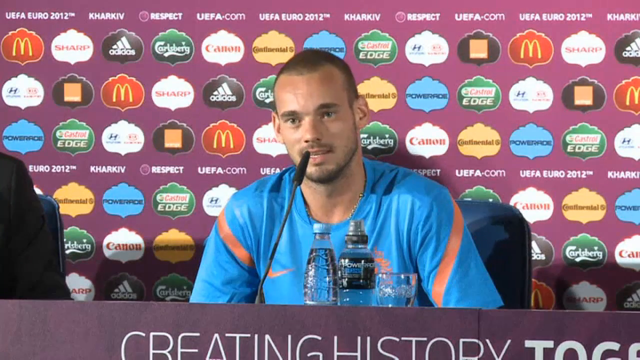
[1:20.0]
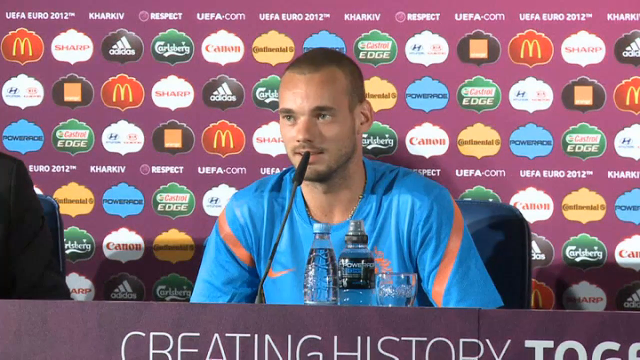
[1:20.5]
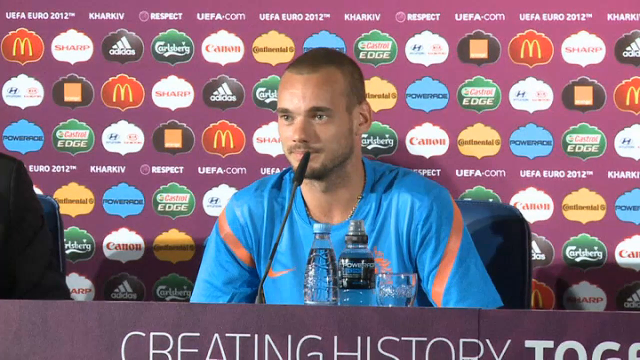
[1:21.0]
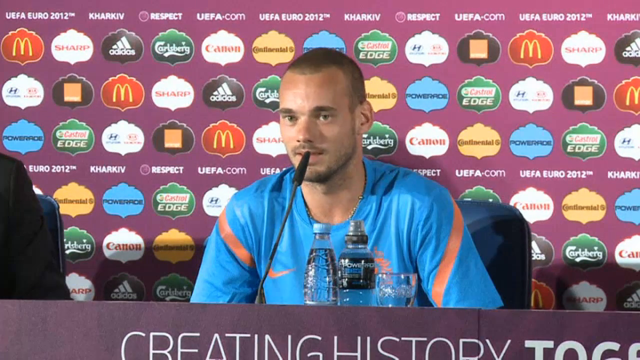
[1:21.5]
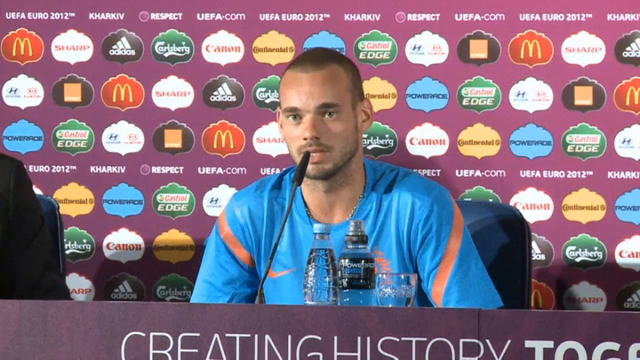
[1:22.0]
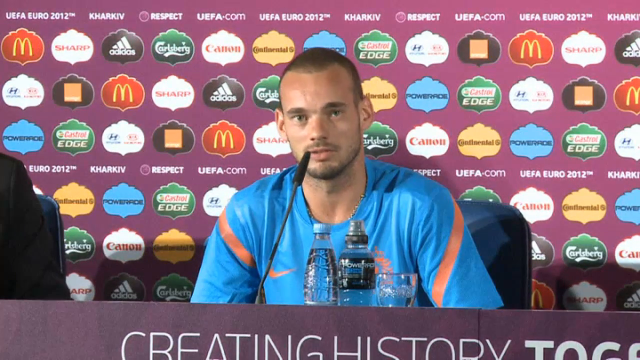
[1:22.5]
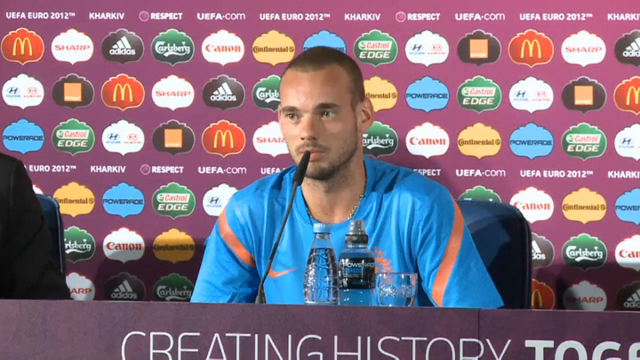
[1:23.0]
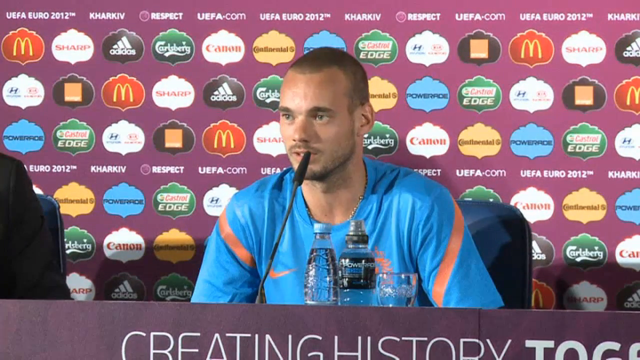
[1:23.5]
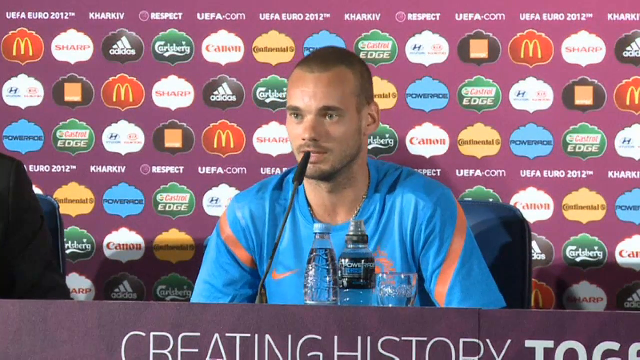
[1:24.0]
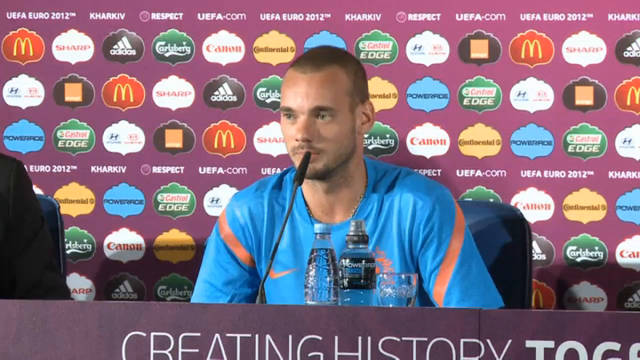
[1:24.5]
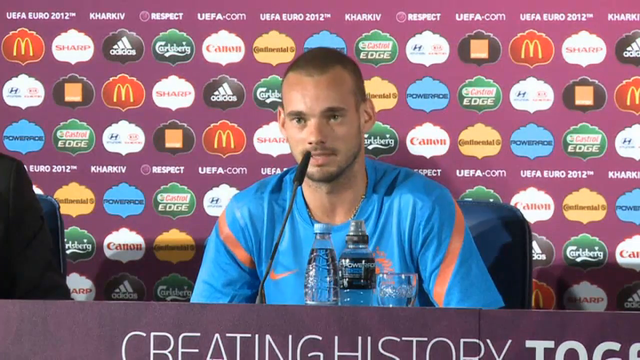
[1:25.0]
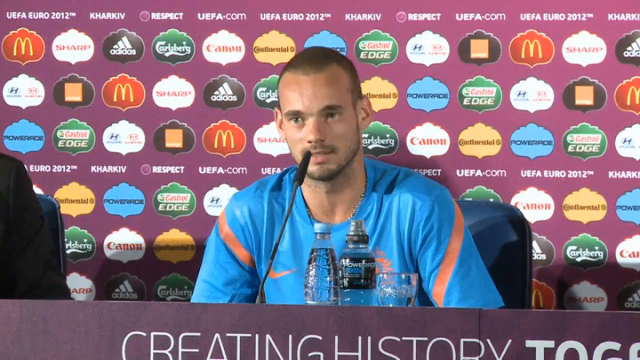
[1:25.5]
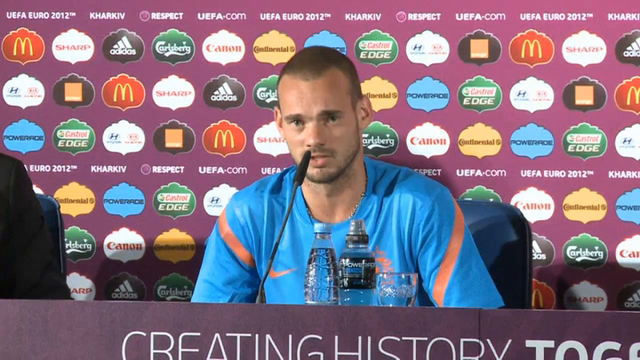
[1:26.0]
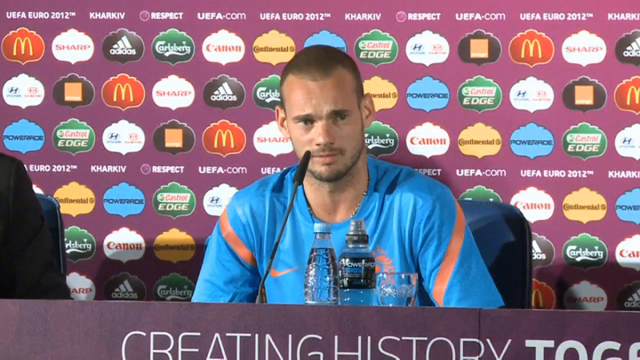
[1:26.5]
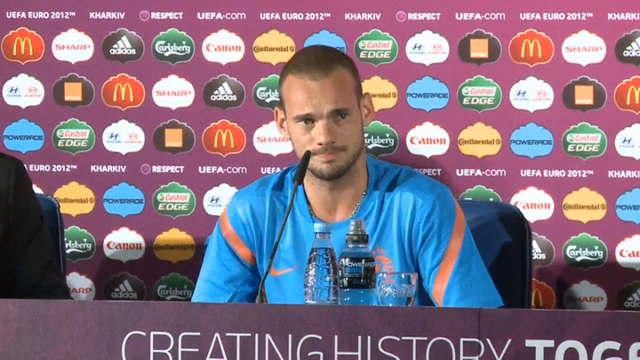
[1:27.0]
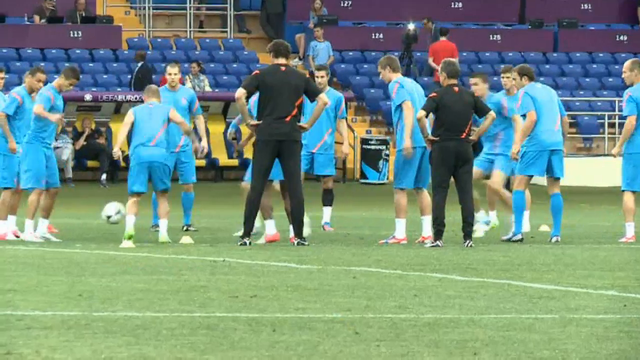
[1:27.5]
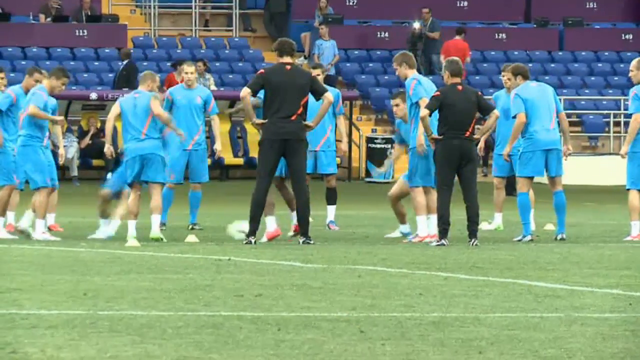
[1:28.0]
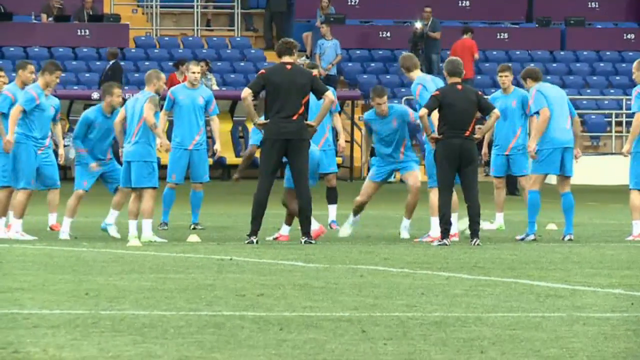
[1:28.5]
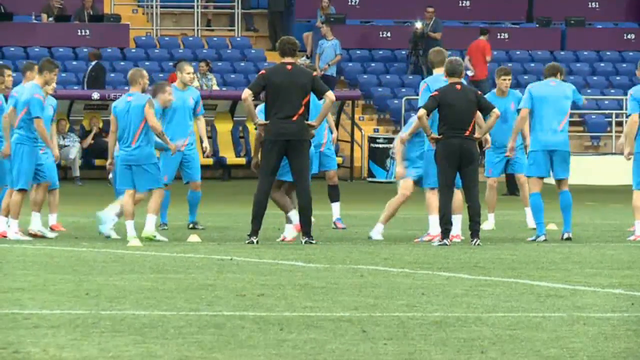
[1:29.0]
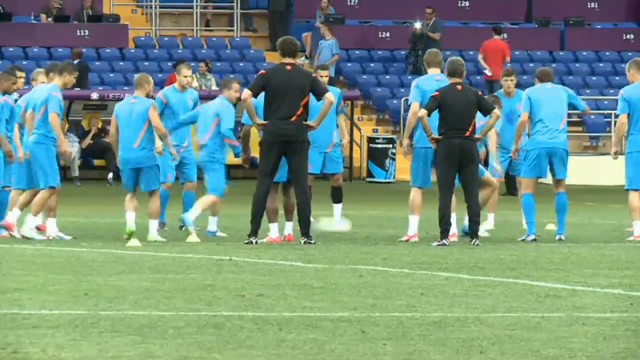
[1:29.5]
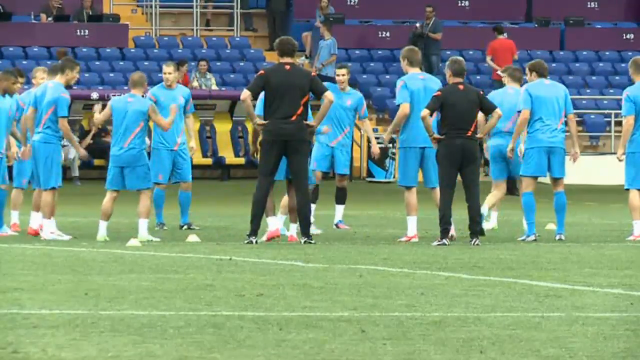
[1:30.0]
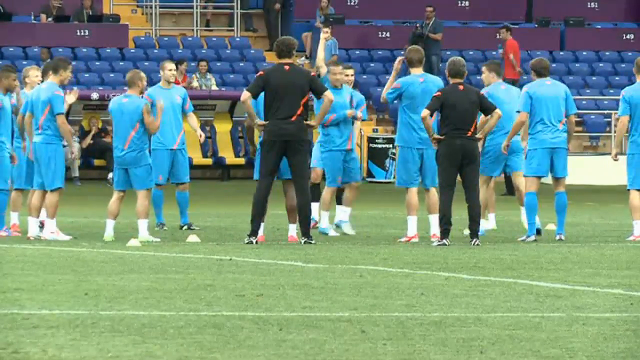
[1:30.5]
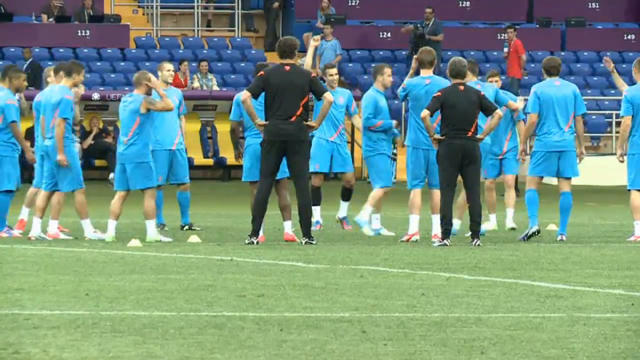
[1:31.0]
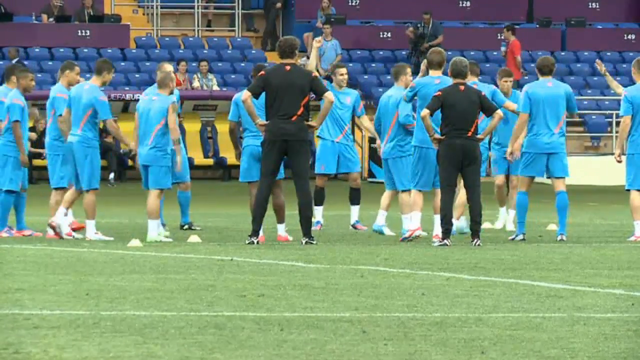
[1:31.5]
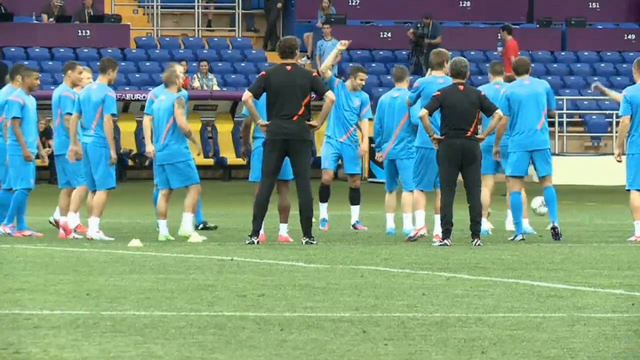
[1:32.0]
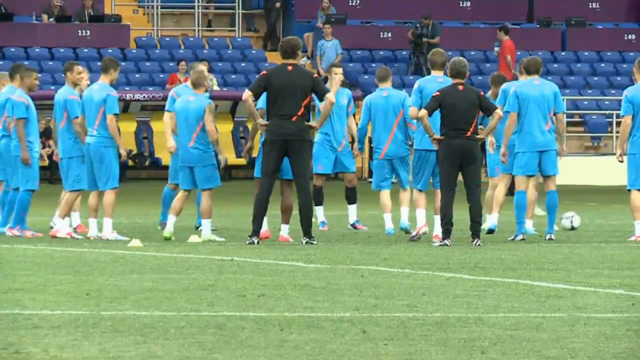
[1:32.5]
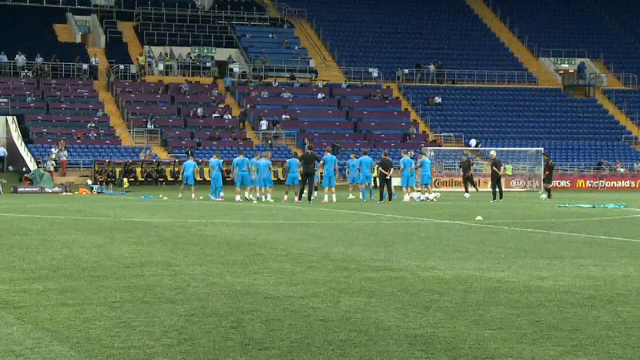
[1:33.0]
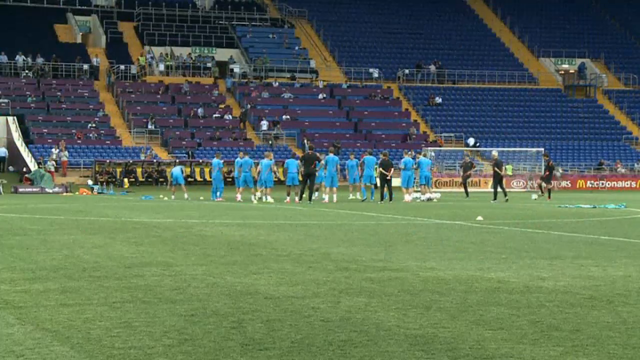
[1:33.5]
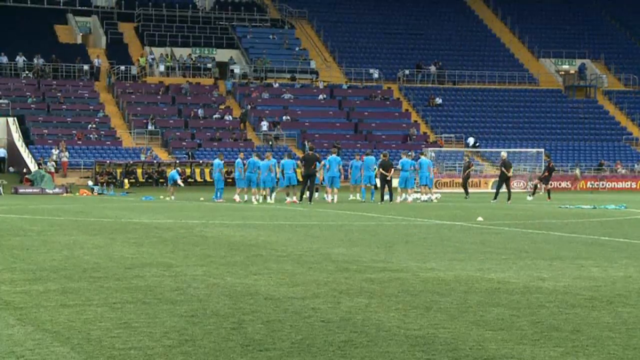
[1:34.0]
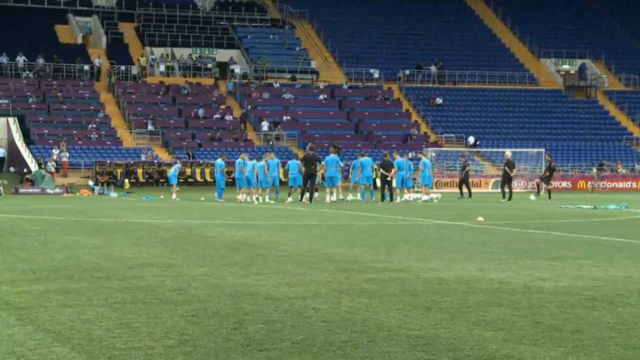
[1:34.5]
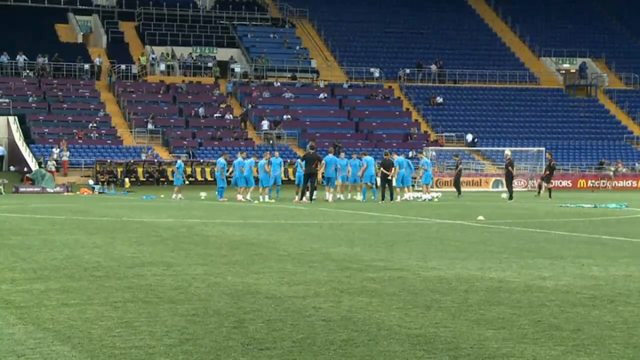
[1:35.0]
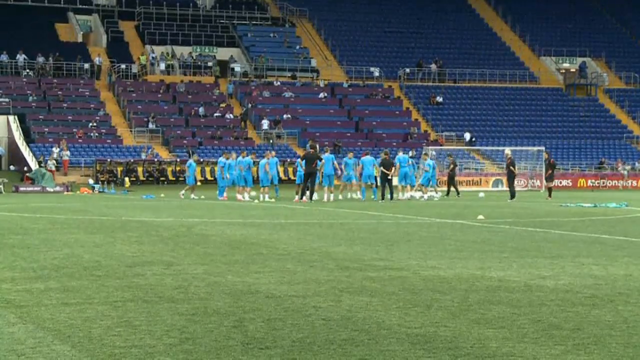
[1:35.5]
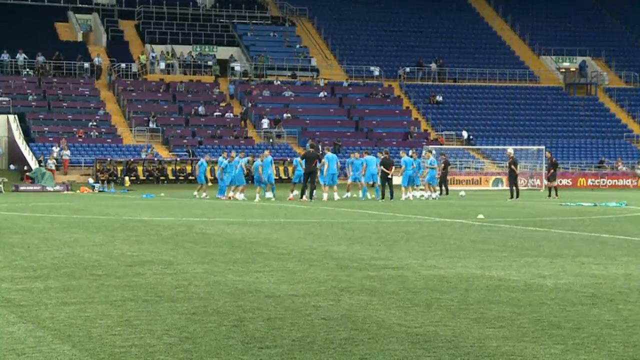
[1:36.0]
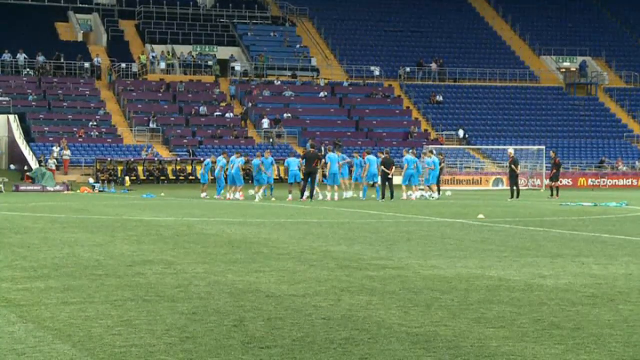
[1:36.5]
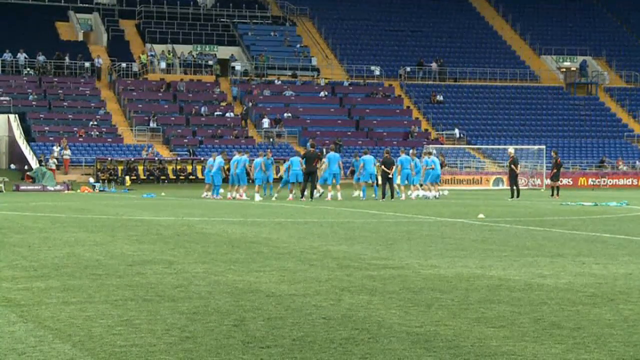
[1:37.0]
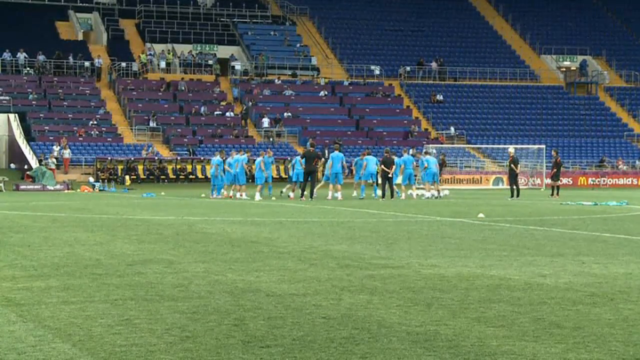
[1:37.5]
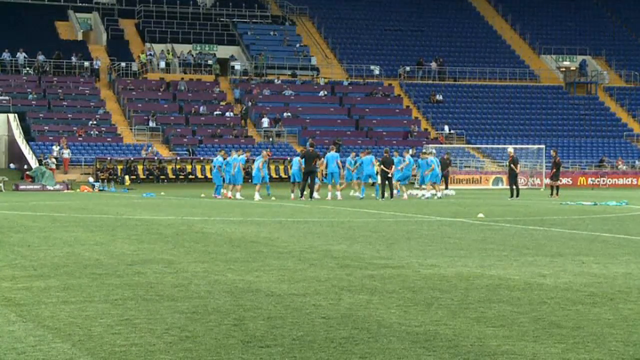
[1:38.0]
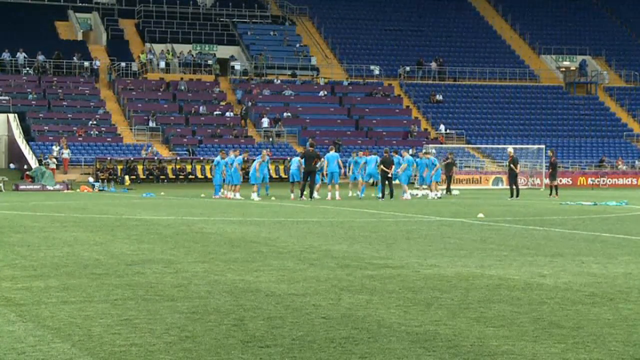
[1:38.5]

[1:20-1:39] The player looks to the right and then back to the center. There looks to be a spotlight on him, as the right side of his face is brighter than the left. His mouth closes, he looks to the right, his eyes dart left and right, and he looks back to the center with a slight nod. His brows furrow and his lips close and tighten. The video returns to the field, where the players are warming up. A couple of the coaches stand with their hands on their hips as the players, in a semicircle, each take turns kicking the ball in the center. Someone kicks the ball out, and a few of the men raise their right arms in the air. The camera watches from farther back, showing the players standing around and more of the trainers or coaches; one has his hands behind his back, and one is holding a ball with his right foot. Someone kicks the ball in, and a couple of players are in the center as everybody kicks the ball back and forth.